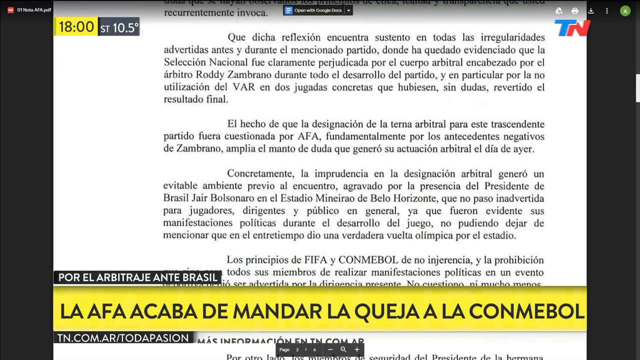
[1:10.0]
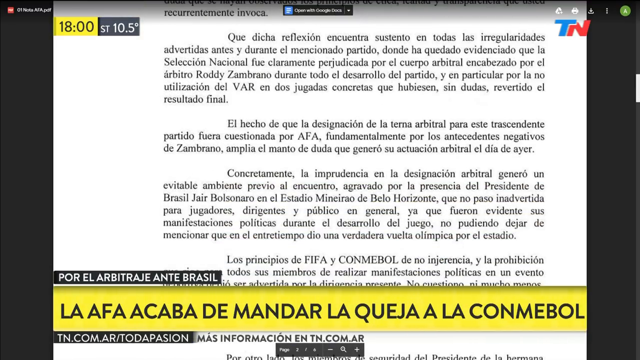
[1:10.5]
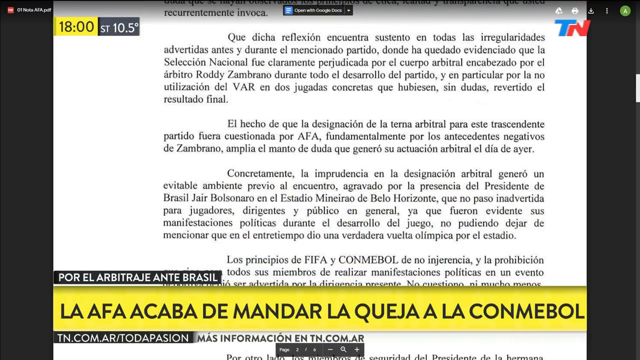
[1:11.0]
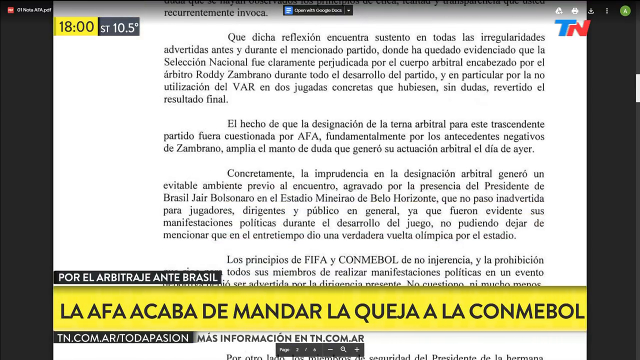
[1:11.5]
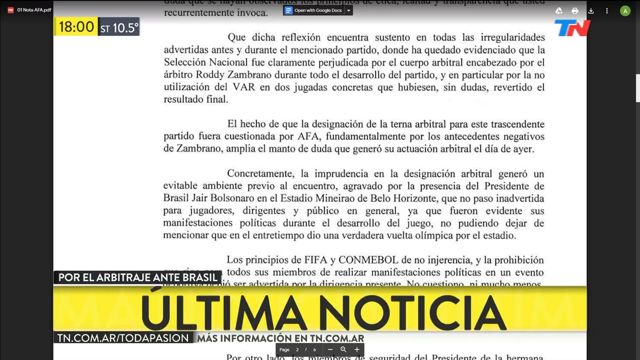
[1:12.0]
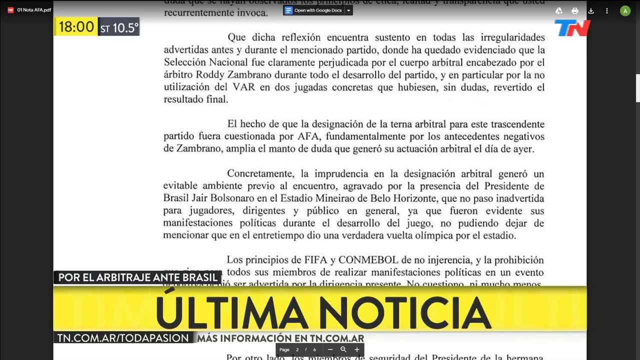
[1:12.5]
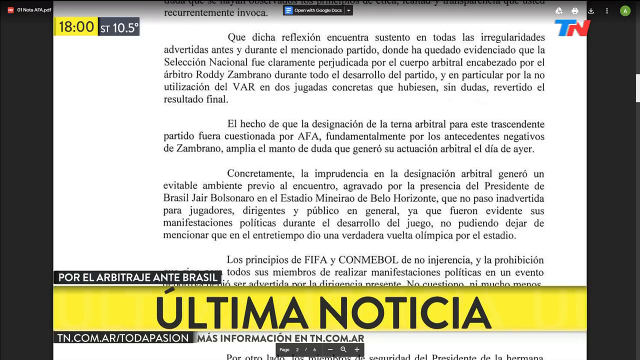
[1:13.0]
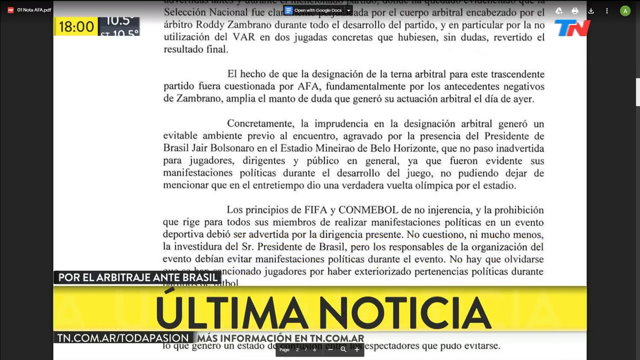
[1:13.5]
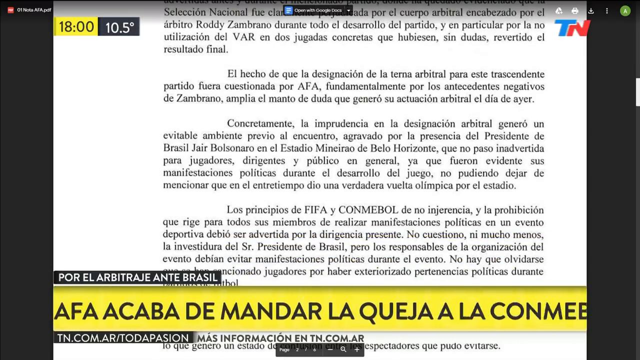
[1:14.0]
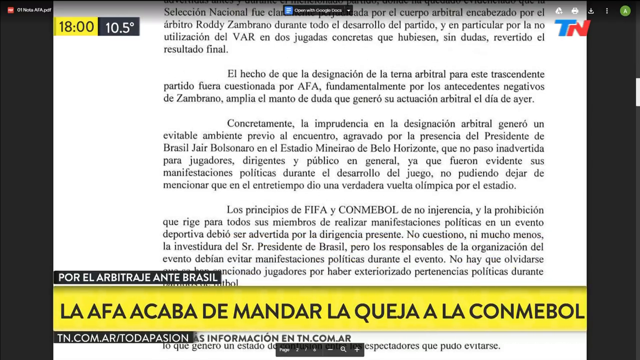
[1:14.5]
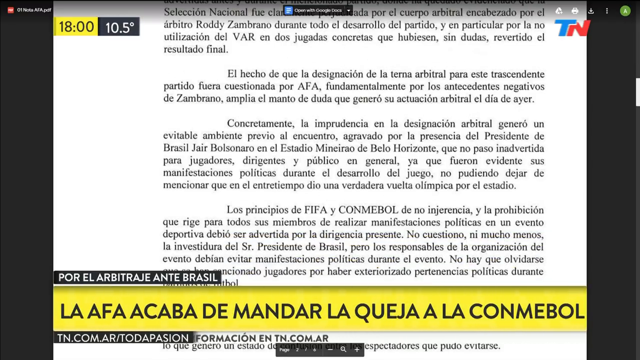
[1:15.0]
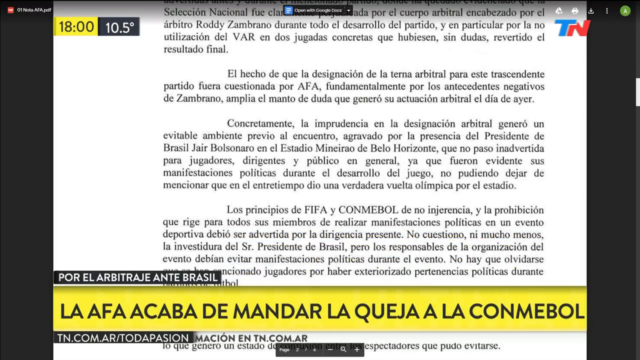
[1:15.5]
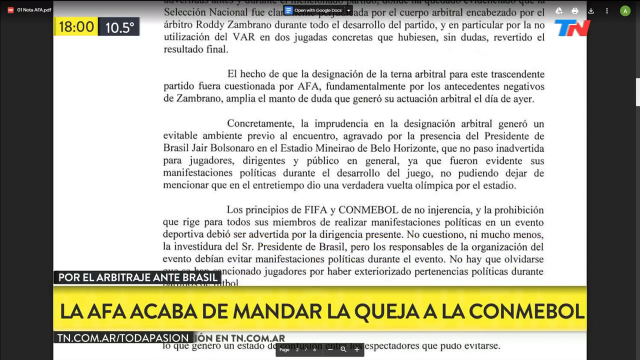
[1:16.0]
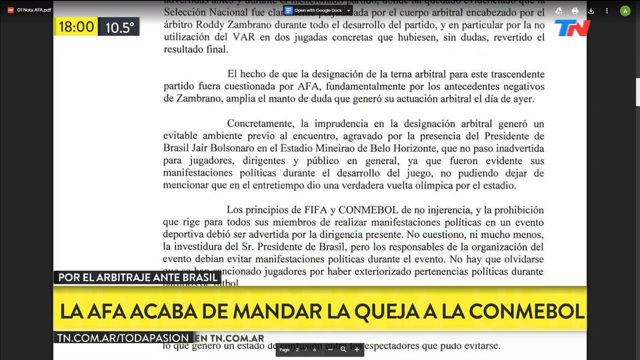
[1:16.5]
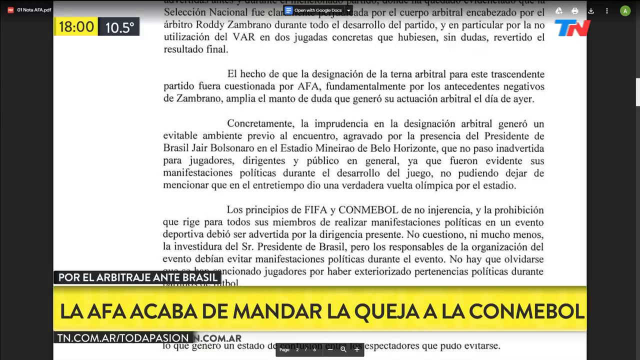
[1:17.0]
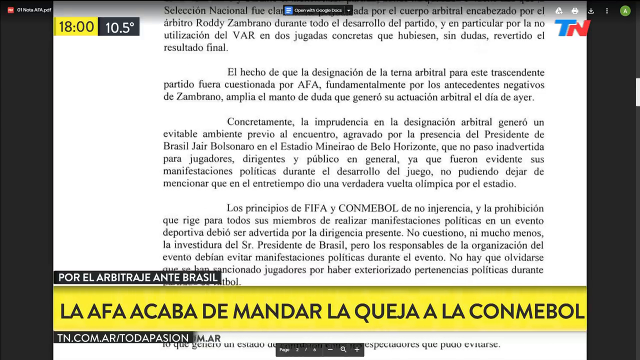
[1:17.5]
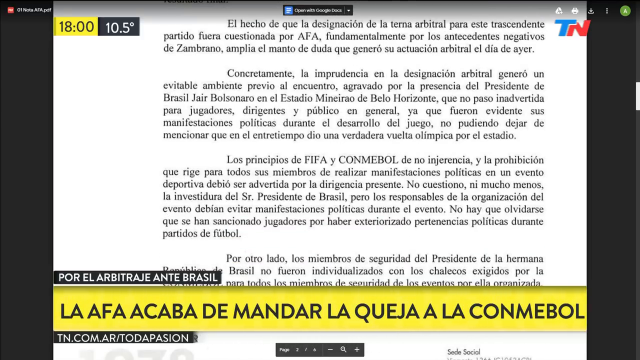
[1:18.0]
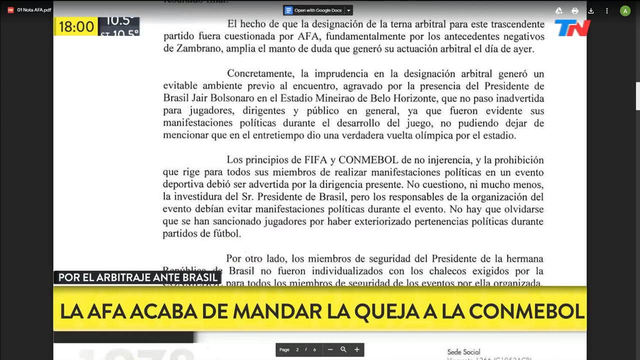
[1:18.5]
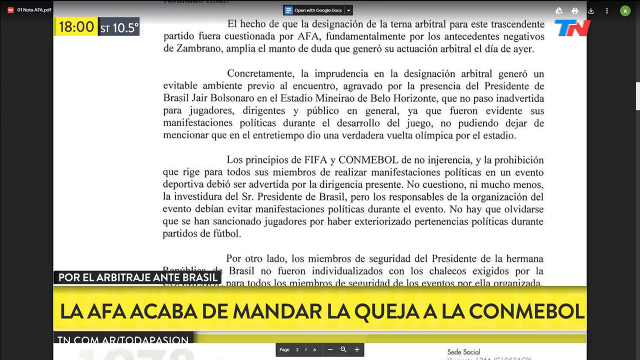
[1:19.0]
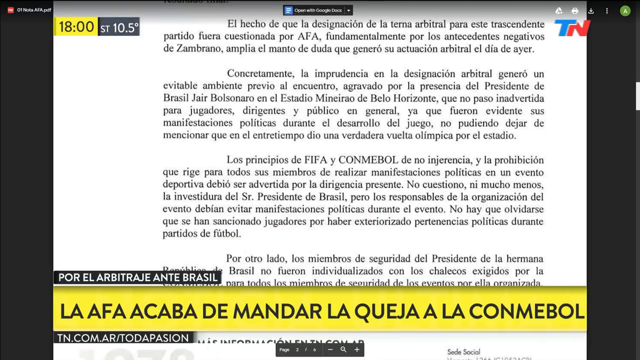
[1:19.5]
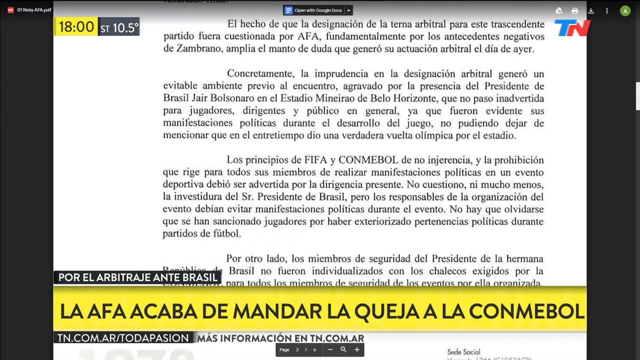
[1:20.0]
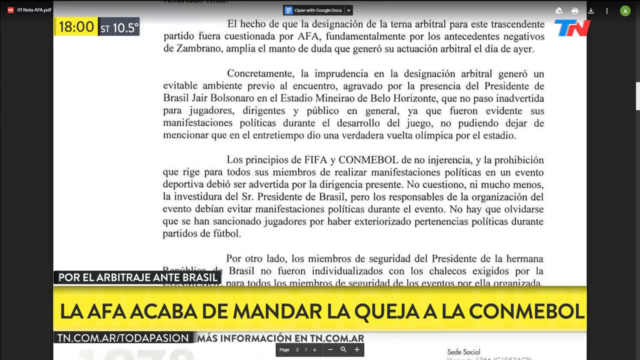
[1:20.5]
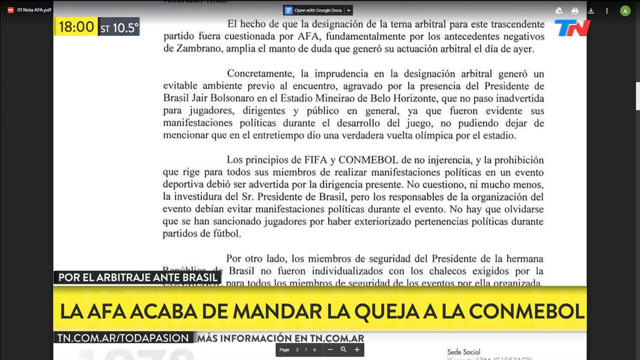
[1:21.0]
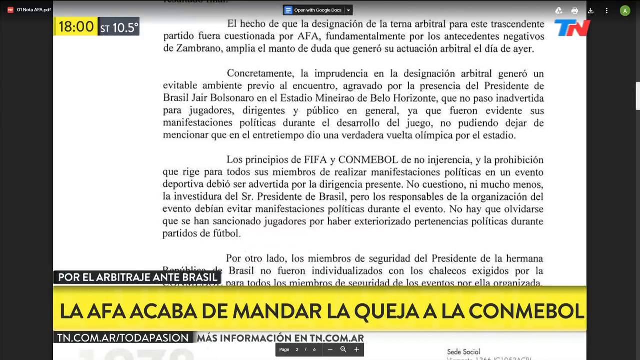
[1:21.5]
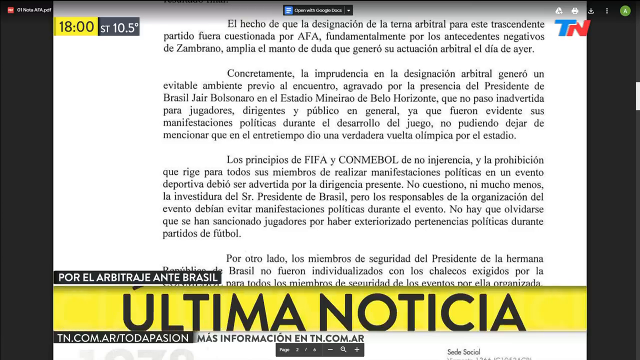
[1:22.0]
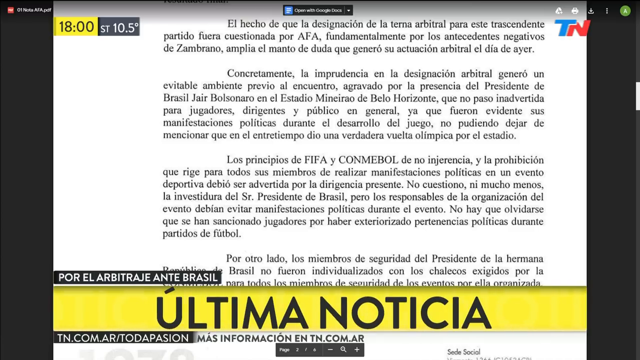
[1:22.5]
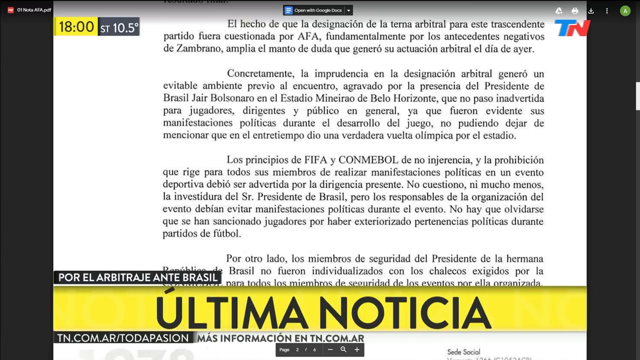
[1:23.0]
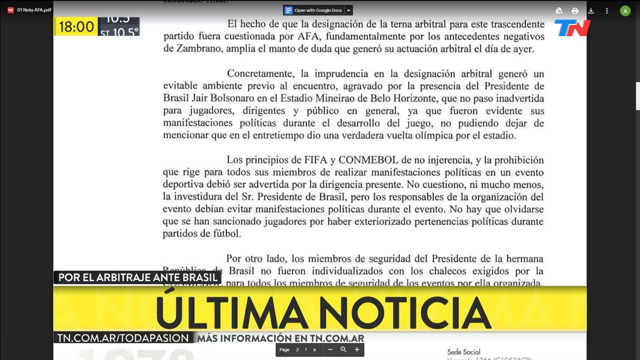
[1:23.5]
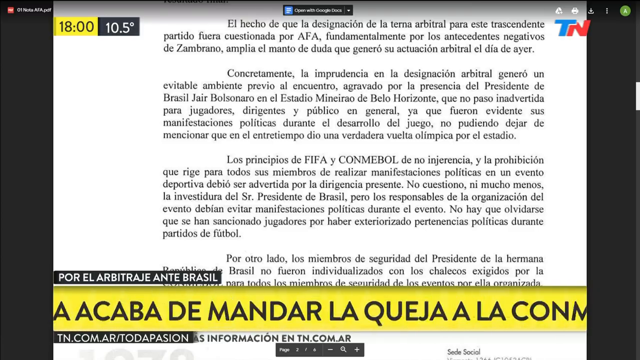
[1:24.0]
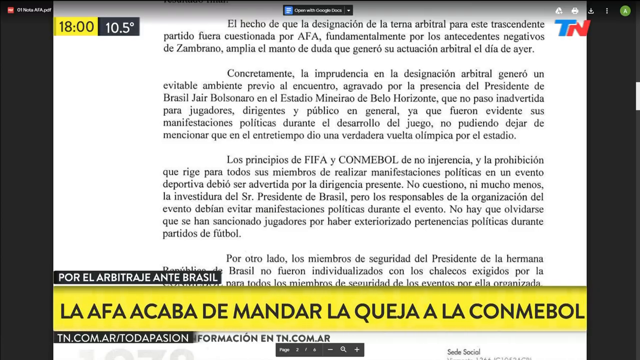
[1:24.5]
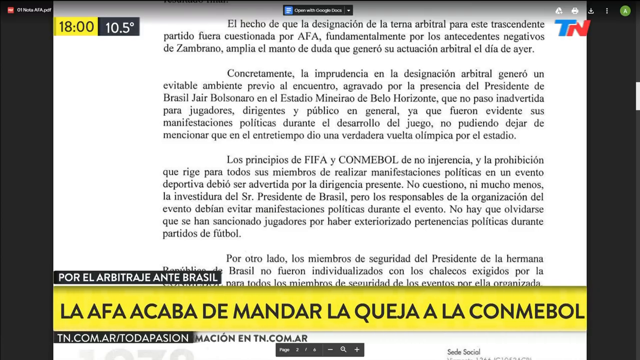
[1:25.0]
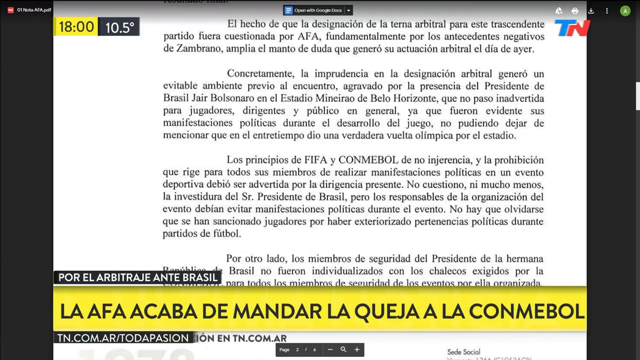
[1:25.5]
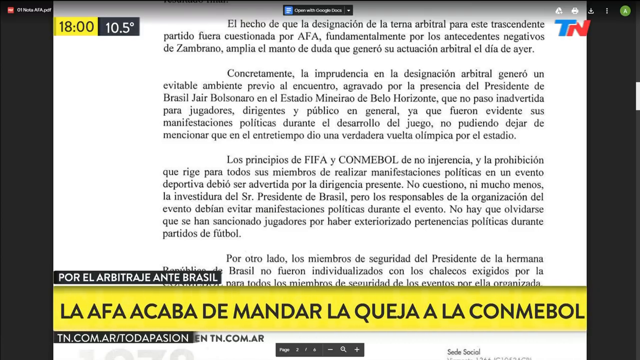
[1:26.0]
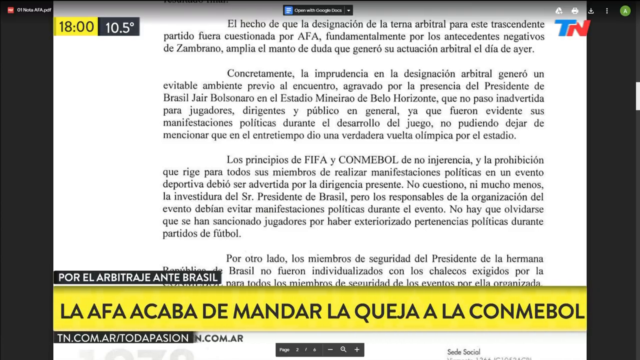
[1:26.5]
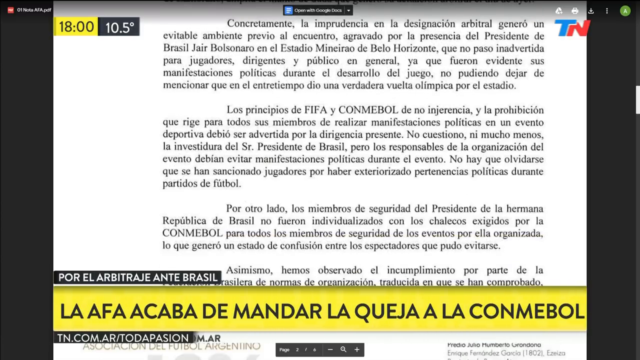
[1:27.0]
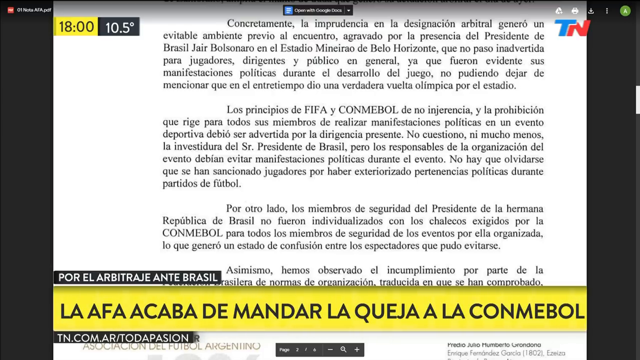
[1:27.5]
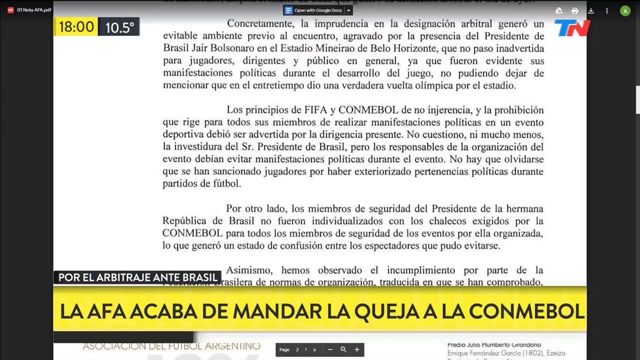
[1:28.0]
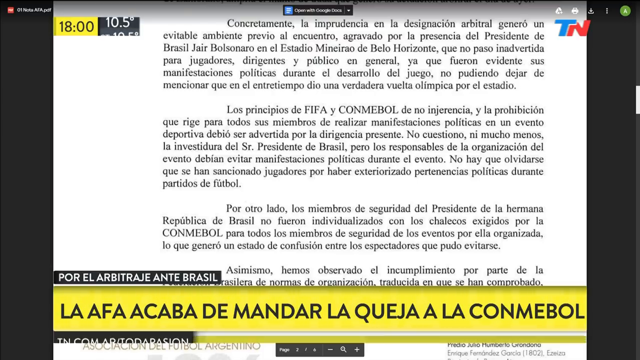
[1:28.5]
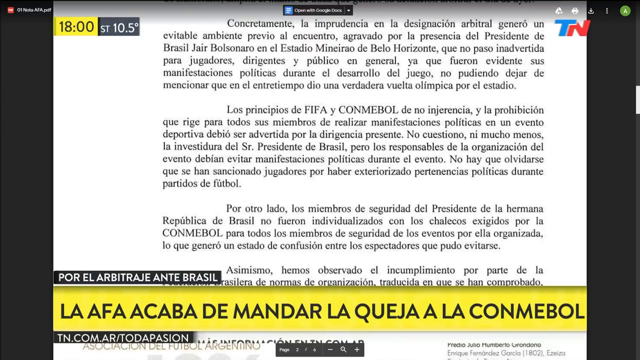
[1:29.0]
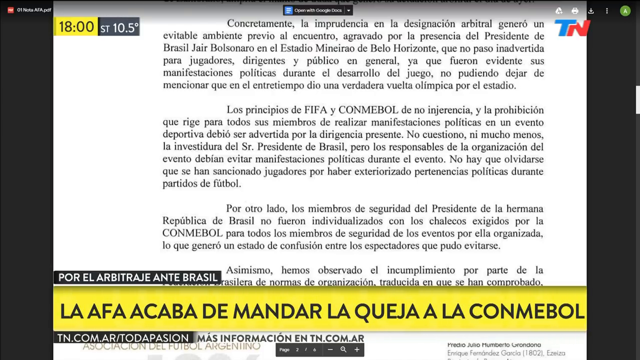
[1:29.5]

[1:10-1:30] The notice with the AFA and "Ultima Noticia" is on screen again, written in Portuguese. The hour shown is 1800 hours. The user scrolls up and down. The paragraphs look a little bit off, and a letterhead at the top says "AFA," possibly related to soccer. It appears to be words on a form or a letter sent to someone.